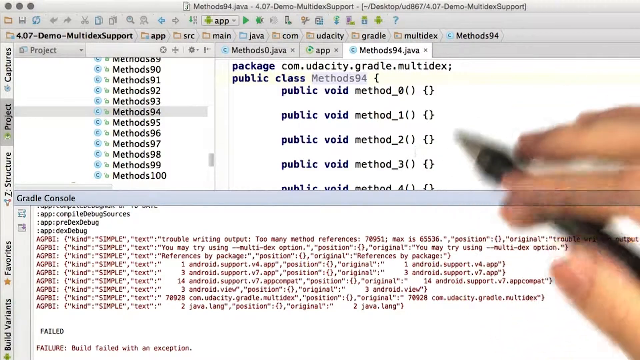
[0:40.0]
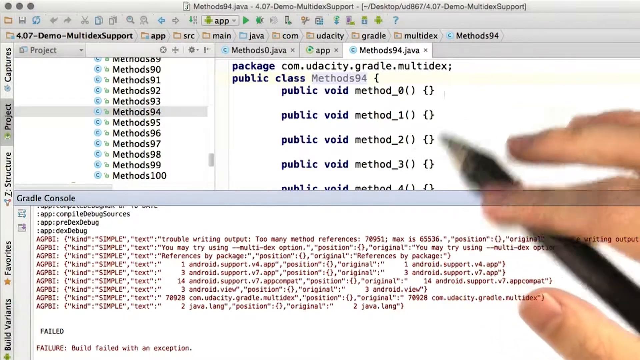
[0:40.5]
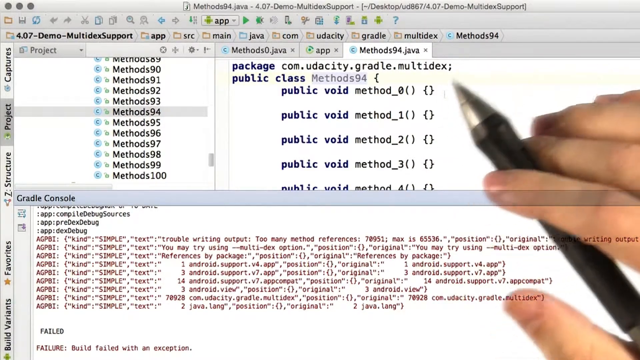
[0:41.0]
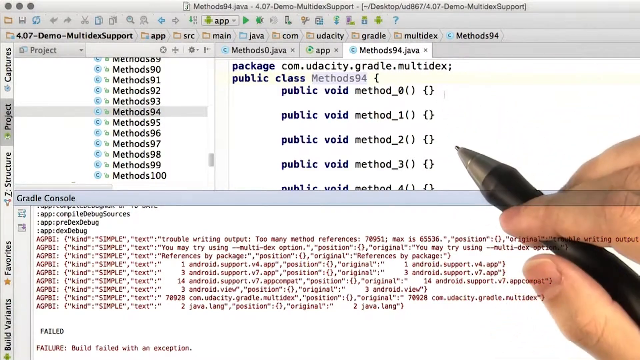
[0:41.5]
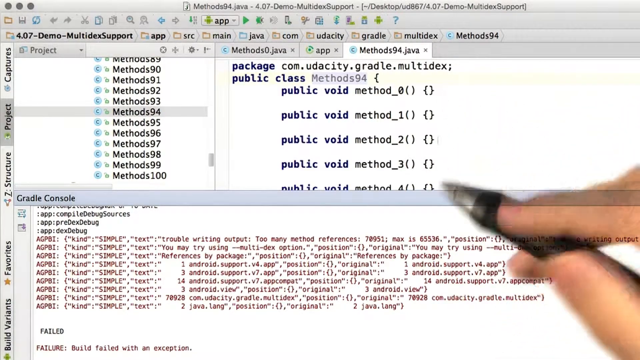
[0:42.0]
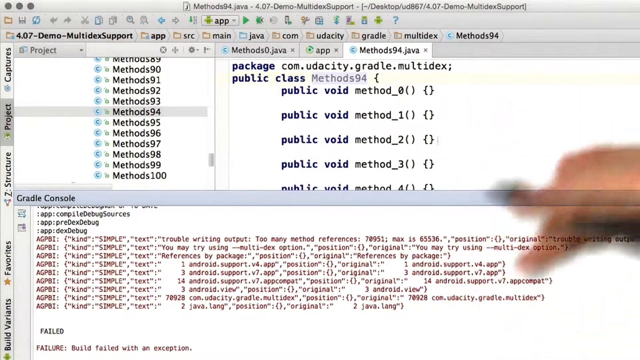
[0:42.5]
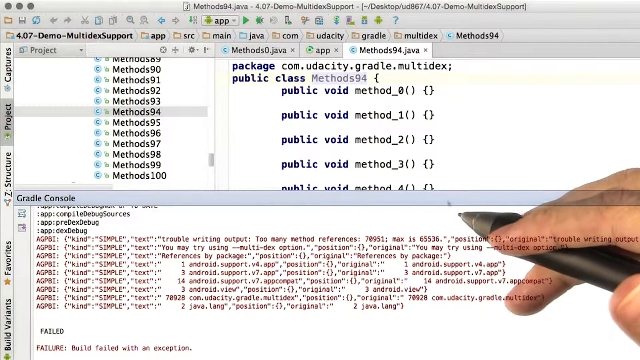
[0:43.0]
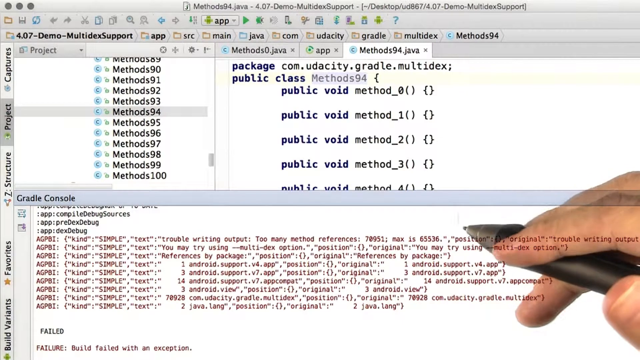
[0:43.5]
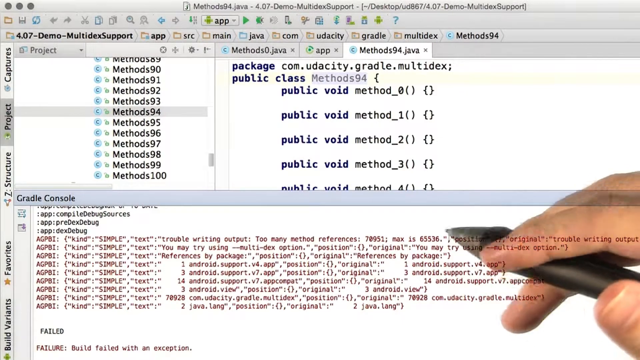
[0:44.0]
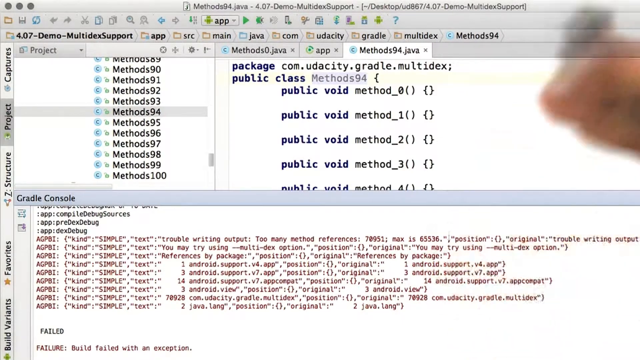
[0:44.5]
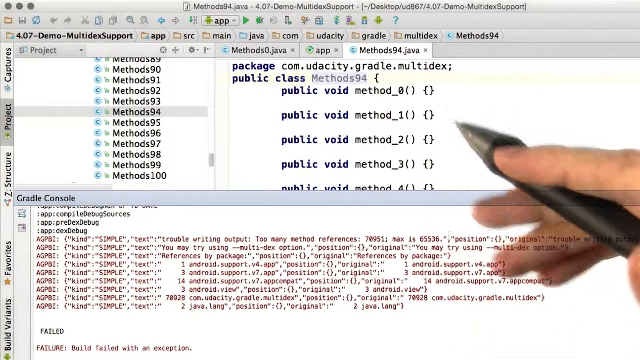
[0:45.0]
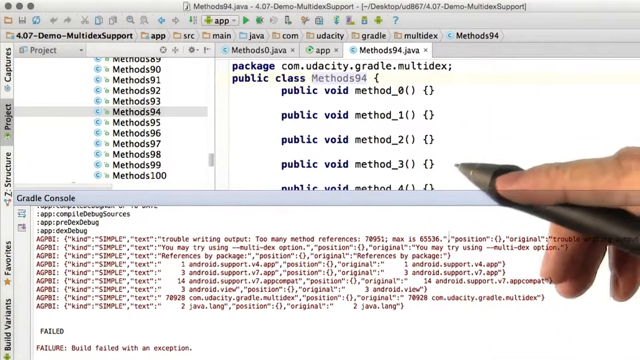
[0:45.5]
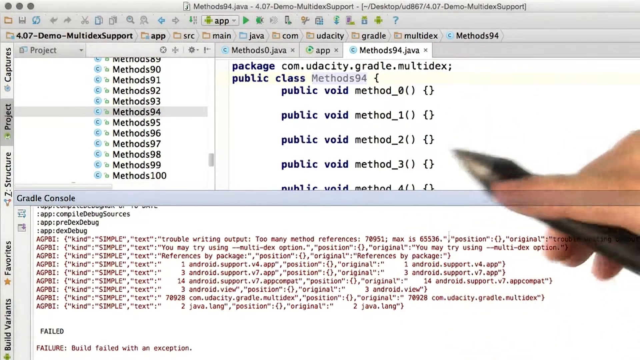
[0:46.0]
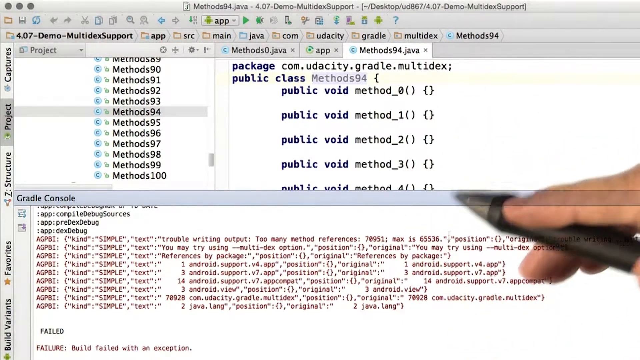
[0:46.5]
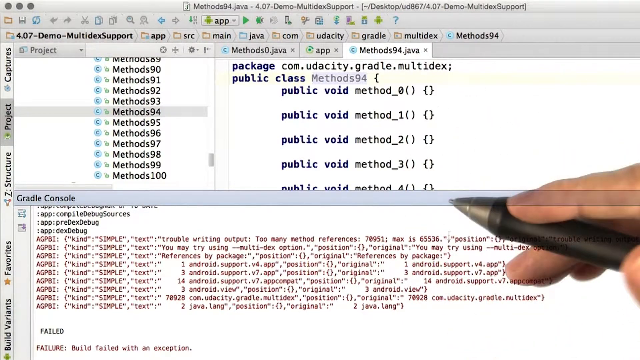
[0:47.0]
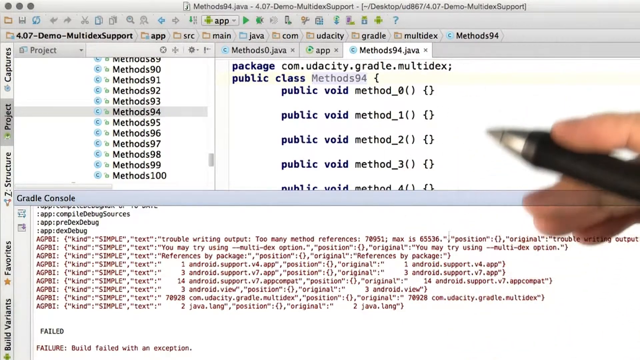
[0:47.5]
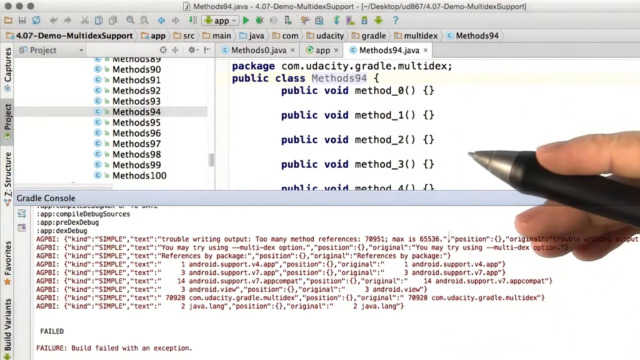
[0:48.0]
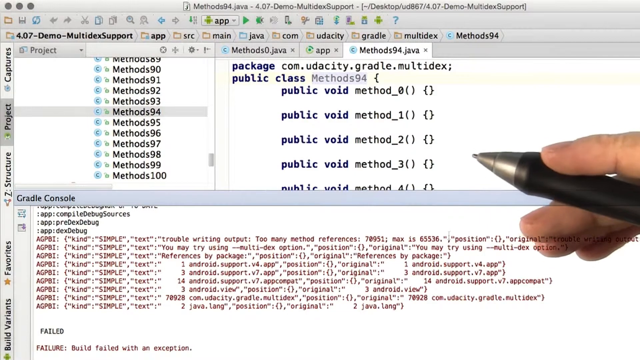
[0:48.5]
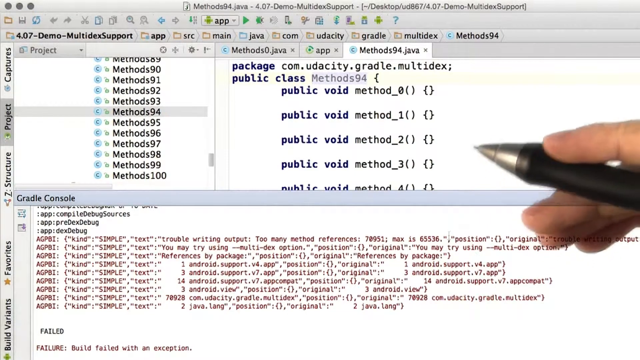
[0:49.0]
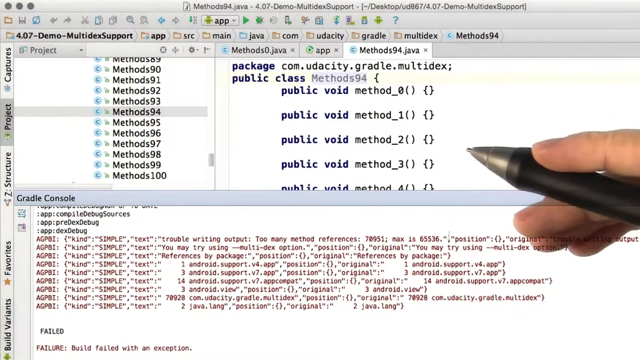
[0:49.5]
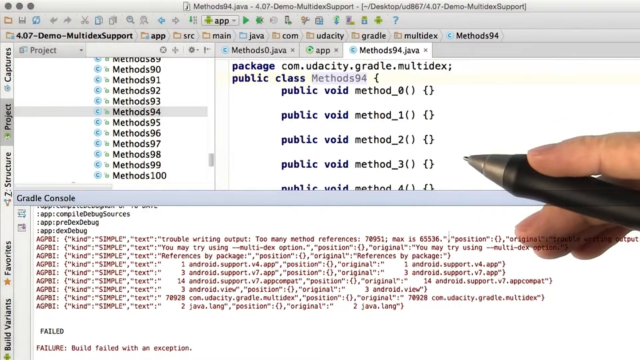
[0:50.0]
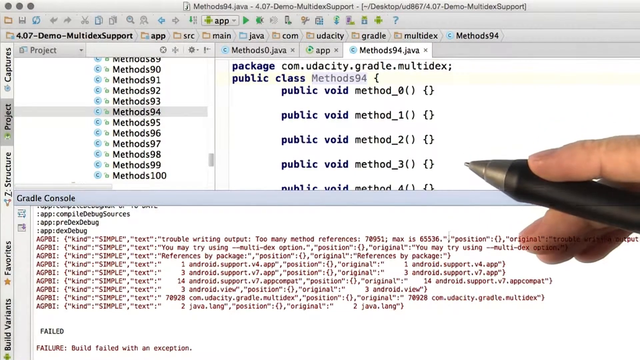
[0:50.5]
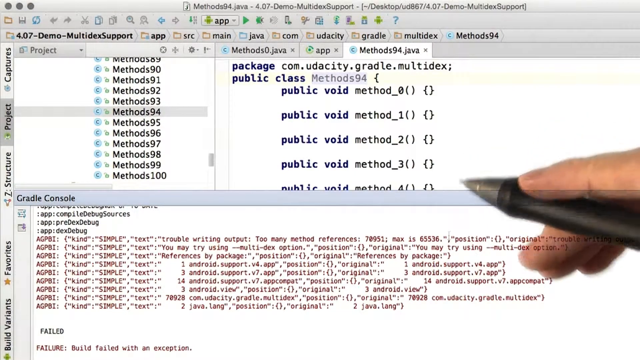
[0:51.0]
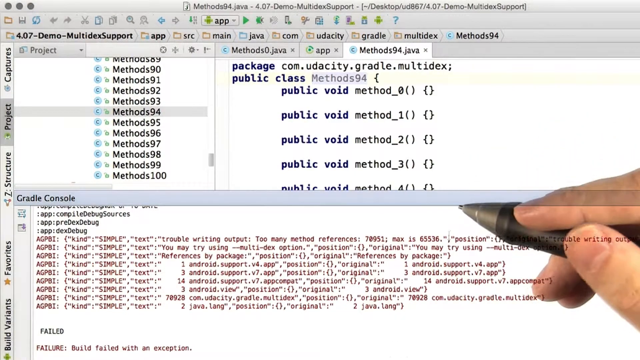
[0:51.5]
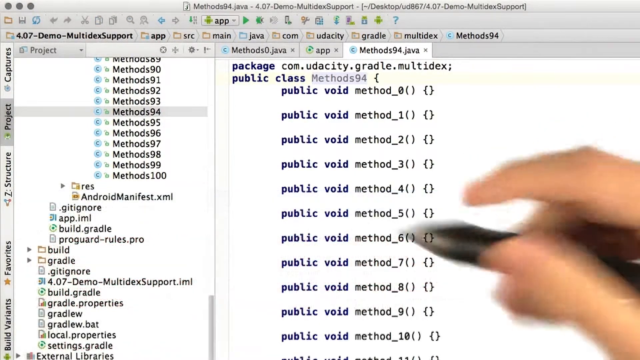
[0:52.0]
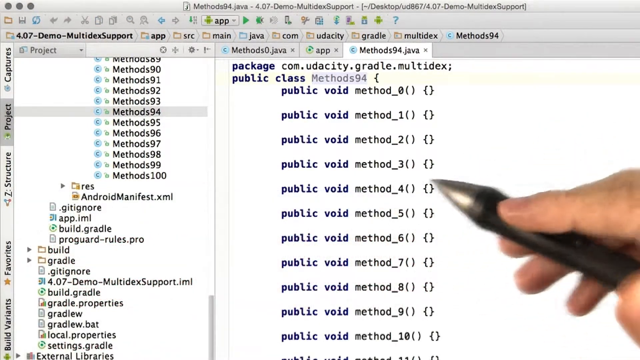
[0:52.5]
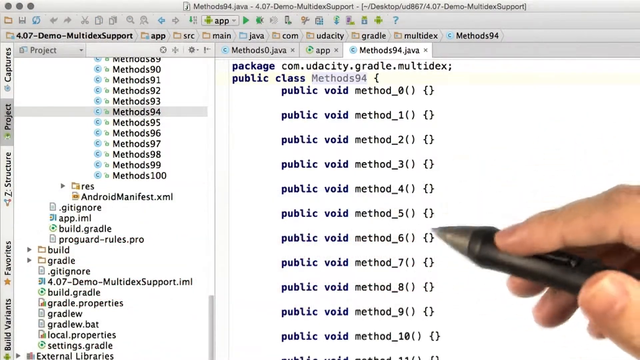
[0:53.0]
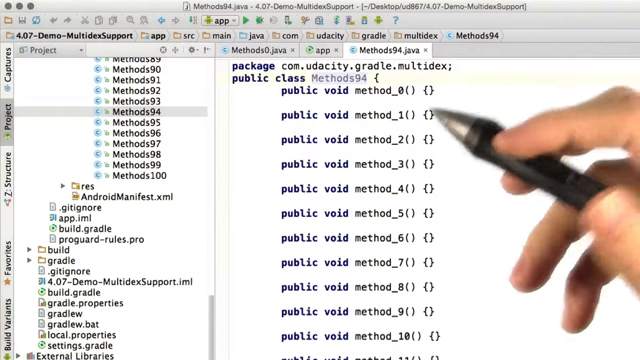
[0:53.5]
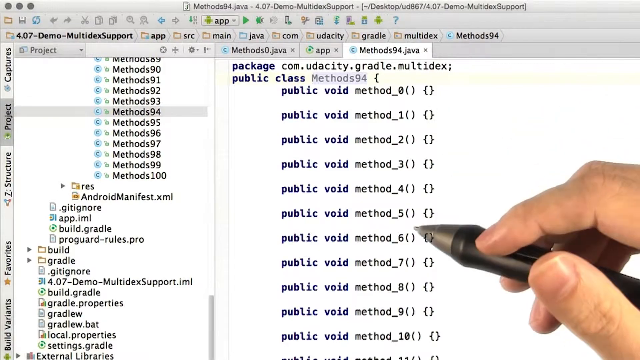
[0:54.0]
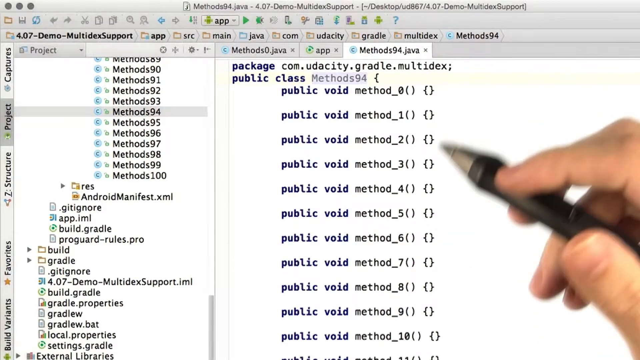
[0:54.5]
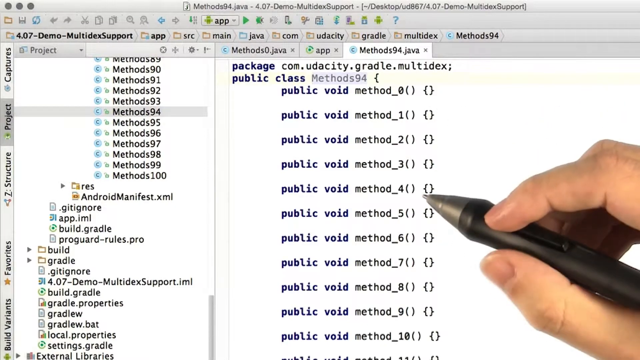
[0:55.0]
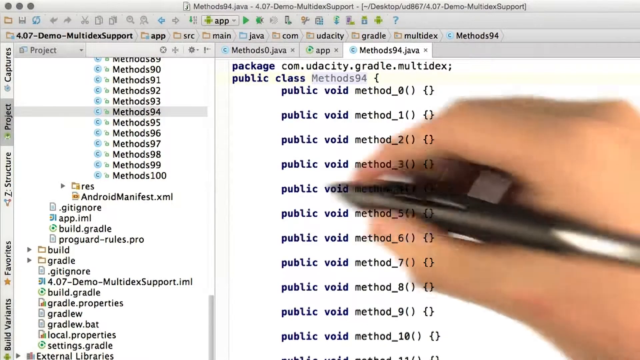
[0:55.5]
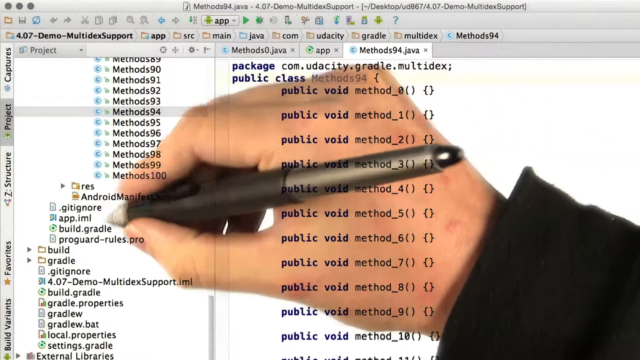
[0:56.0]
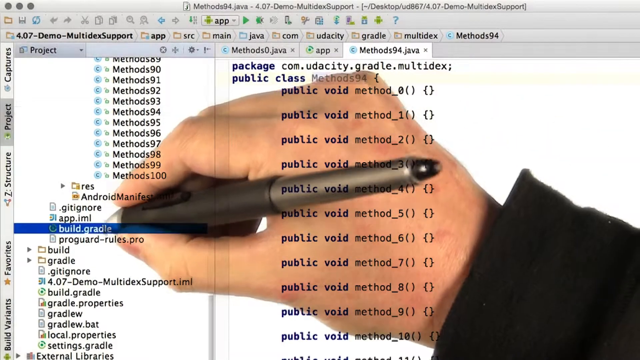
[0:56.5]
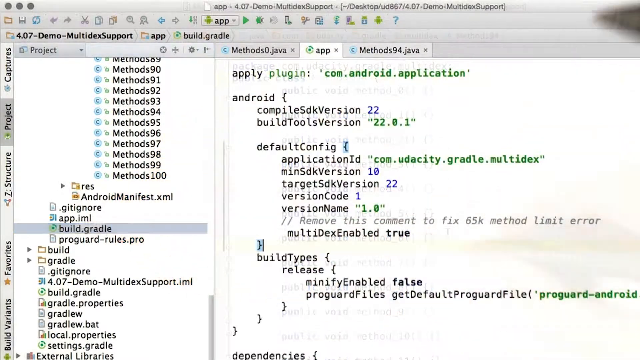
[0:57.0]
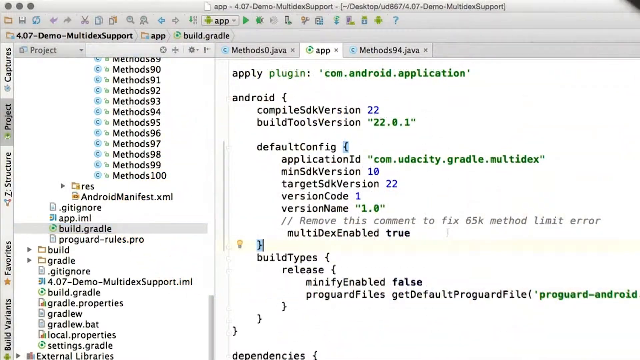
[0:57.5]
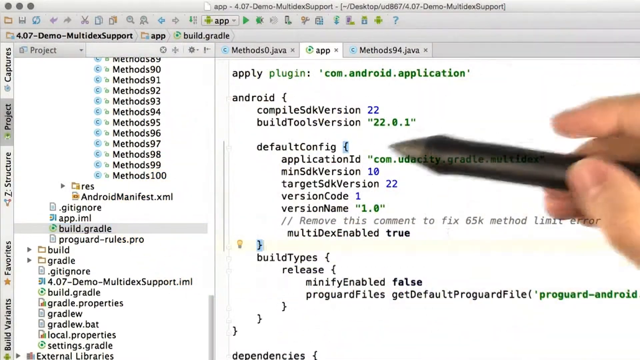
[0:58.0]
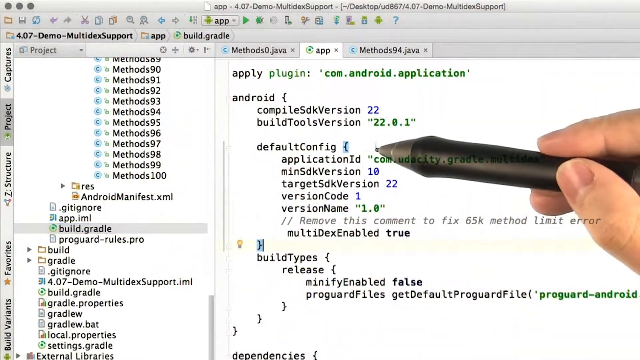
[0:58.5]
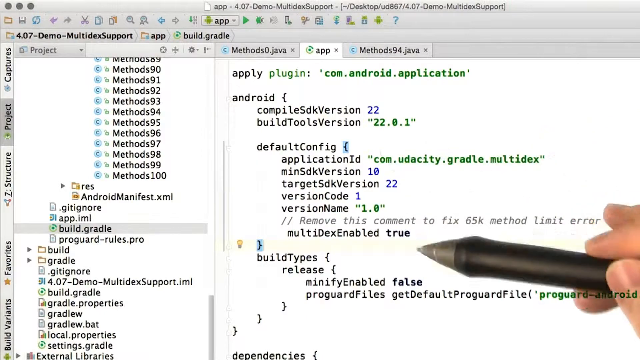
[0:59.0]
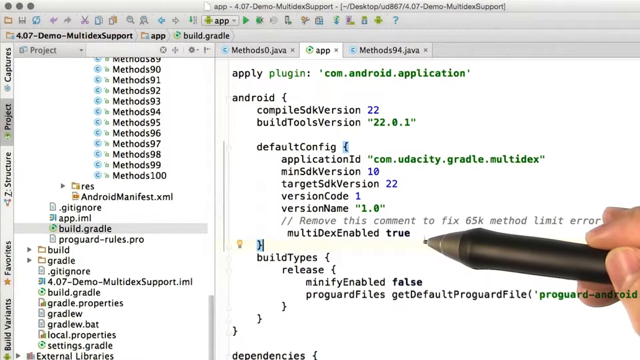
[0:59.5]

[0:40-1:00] About 100 methods are displayed. The teacher selects one of the methods already on the computer, and the public void method is emphasized as he shows the methods.